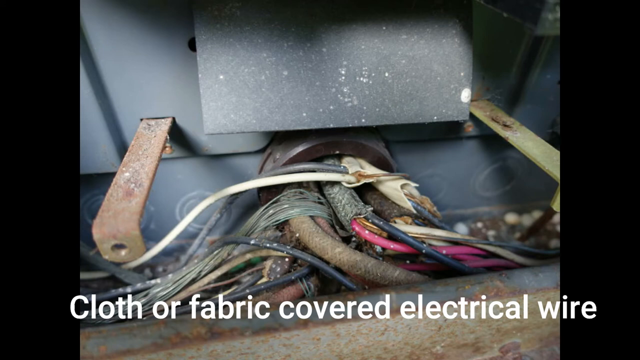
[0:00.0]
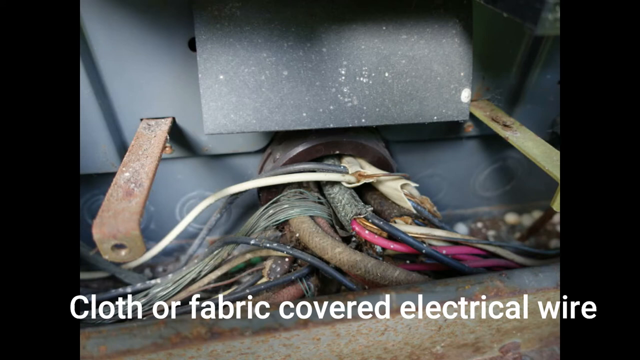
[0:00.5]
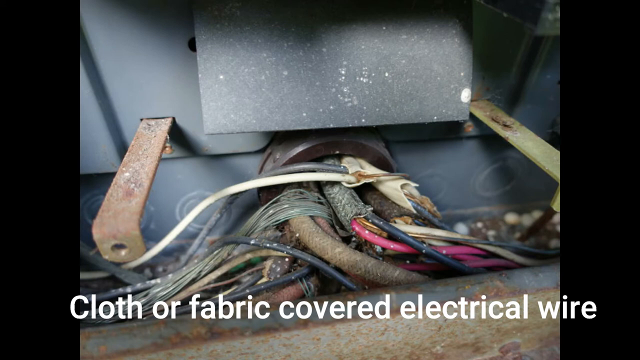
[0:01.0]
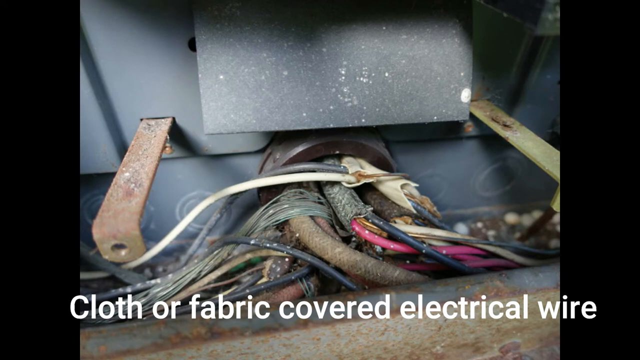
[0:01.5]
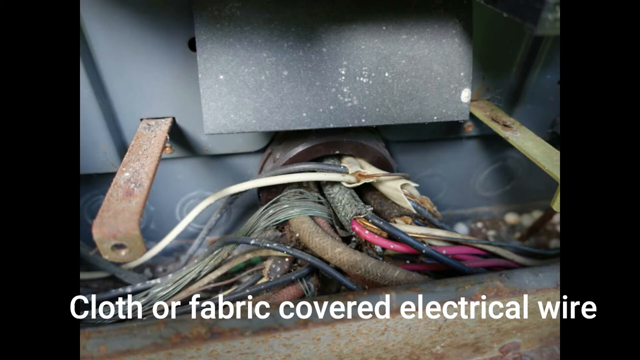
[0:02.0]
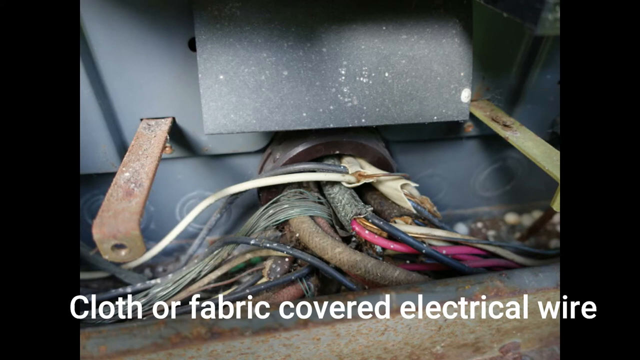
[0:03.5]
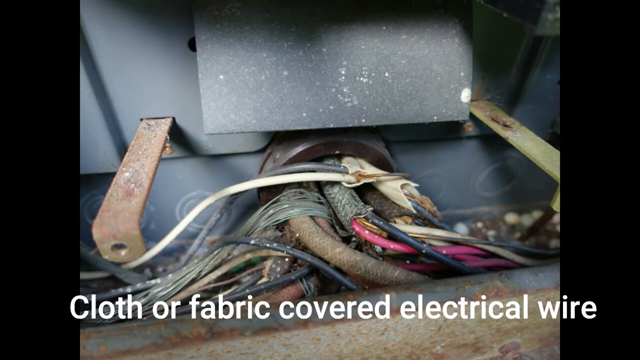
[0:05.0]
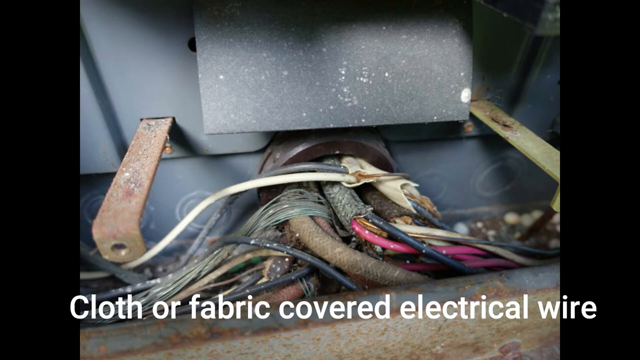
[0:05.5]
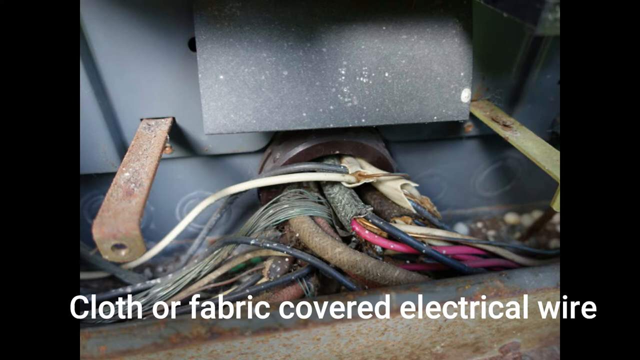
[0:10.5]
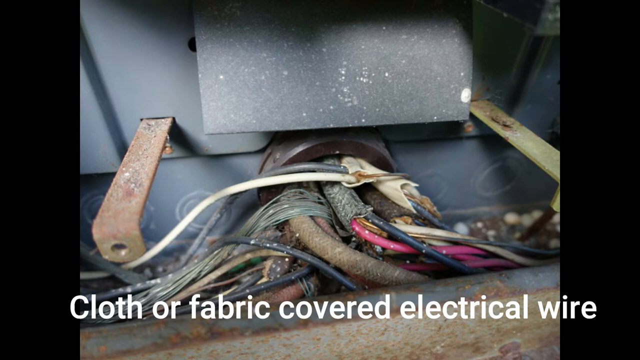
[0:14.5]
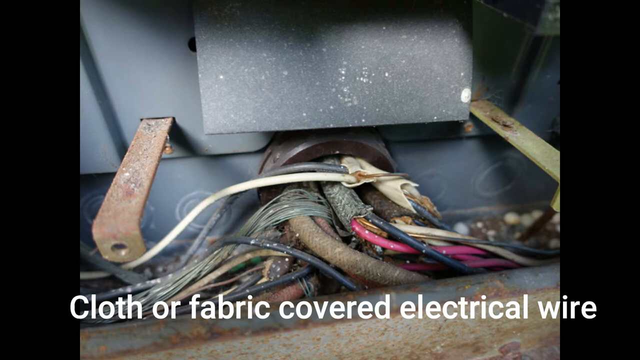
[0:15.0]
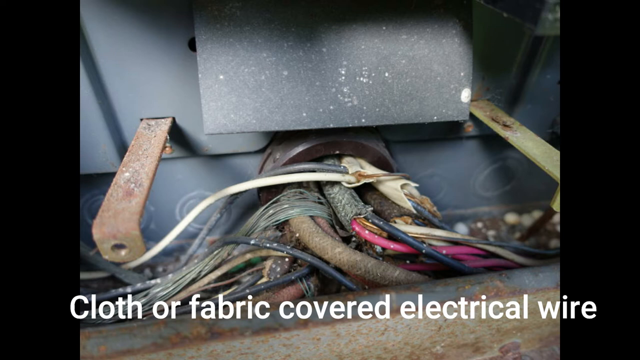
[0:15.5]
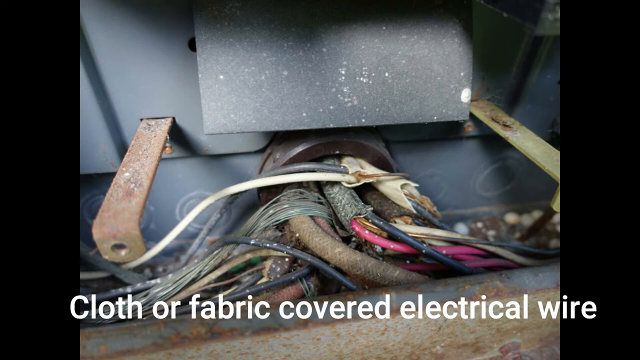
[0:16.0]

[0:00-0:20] A bunch of wires is shown, some of them exposed, with a caption reading "cloth or fabric covered electrical wires." It is unclear where the wires come from; there is metal, and they could be coming from a car, or from some type of device, maybe in a factory. The wires come out of a big brown tube that looks pretty dirty and pretty rusted, and it looks like somebody pulled them through the tube before they spread in all different directions. They are several colors: gray wires, what look like red and maroon wires, and blue wires, going all over the place. The area does not look very clean.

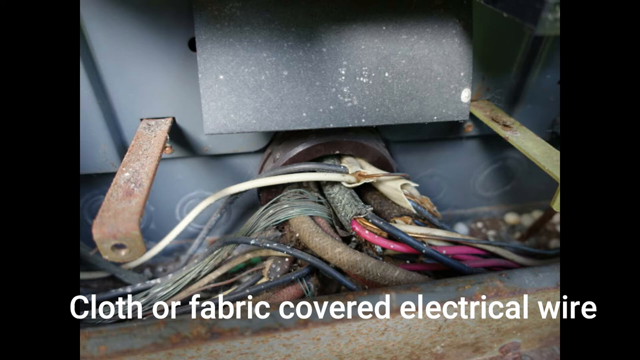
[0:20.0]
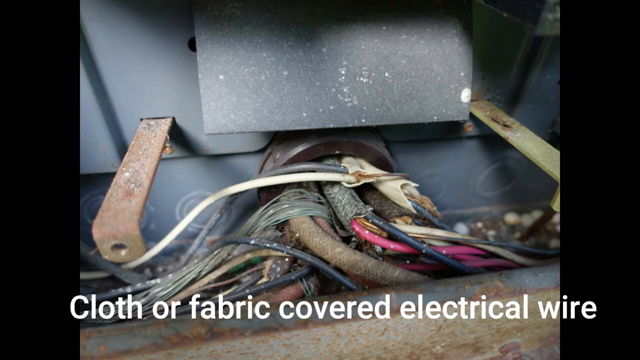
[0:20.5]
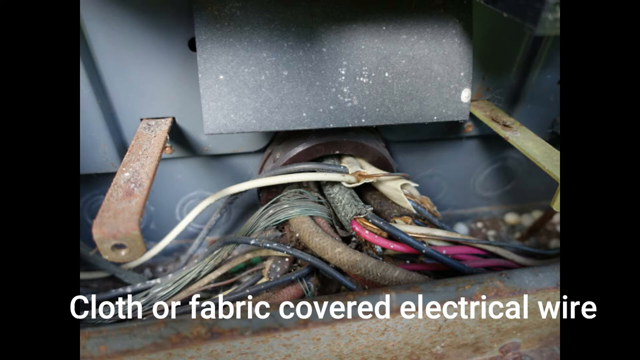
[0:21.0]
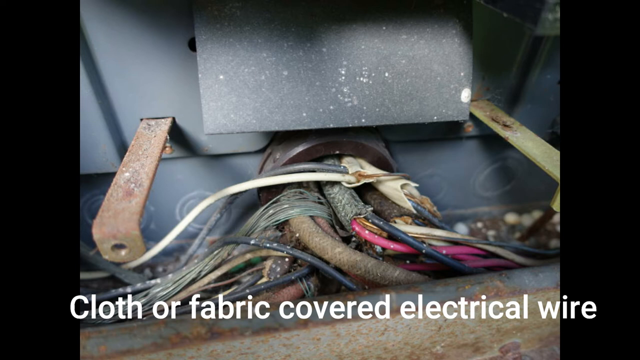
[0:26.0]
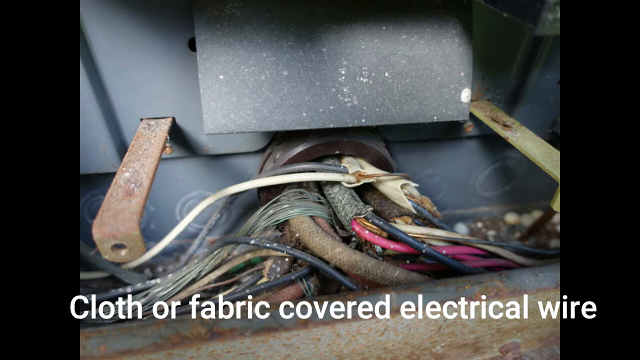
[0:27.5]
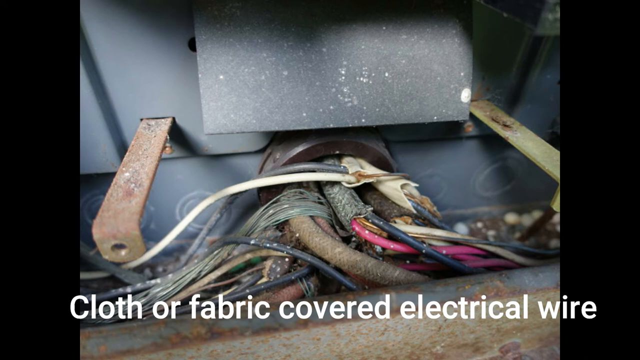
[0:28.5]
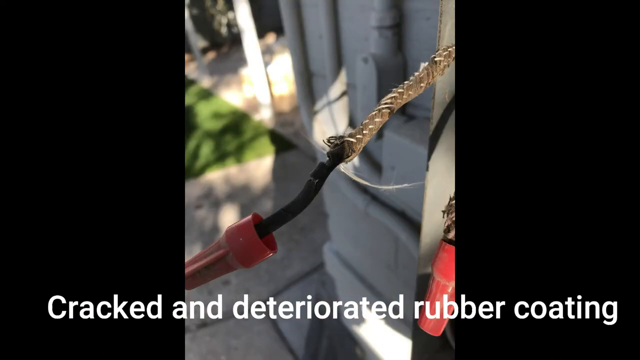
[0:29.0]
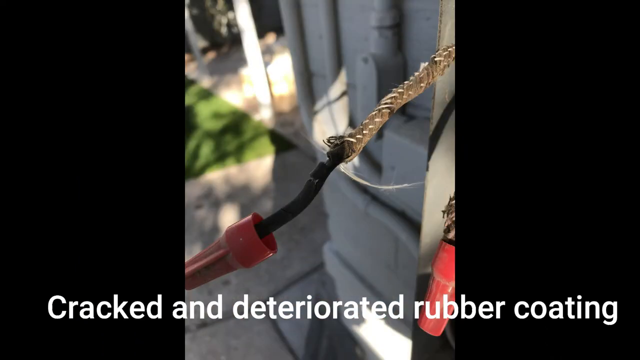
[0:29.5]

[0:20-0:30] A bunch of wires comes out of the big brown tube and goes in all different directions. Some are kind of covered, some are covered in brown, and some come out of what look like conduits and are a little more exposed. Some wires are white, some look blue, and some look pinkish. They may be in some type of machine or manufacturer. A caption reads "cloth or fabric covered electrical wires." The machine the wires come out of looks pretty rusted. The video then cuts to a different shot of one wire that is connected, kind of braided, and going into what looks like a red tube.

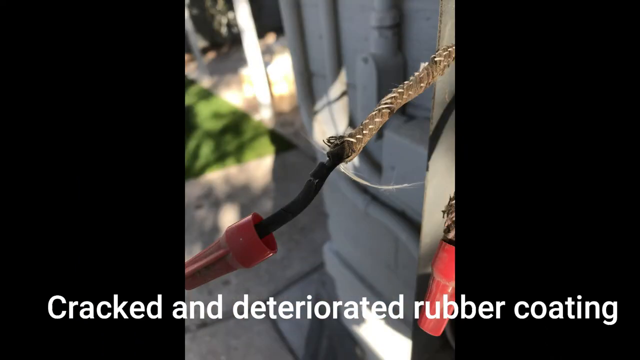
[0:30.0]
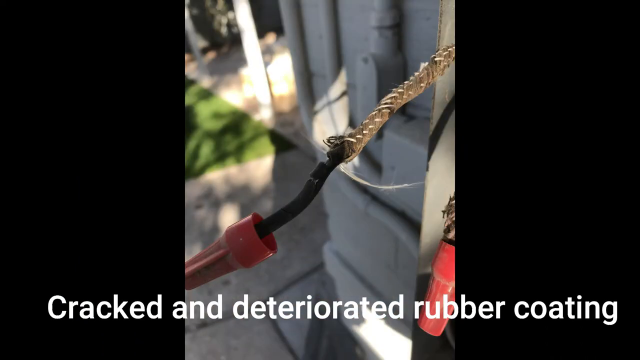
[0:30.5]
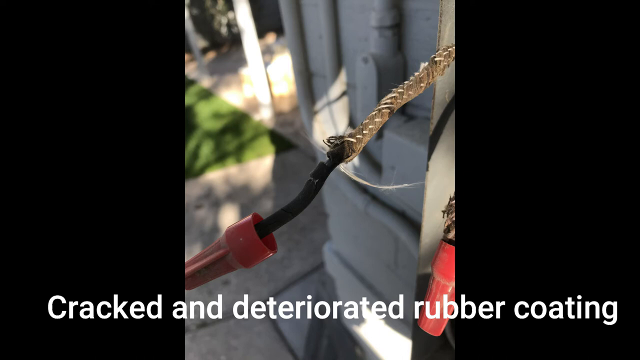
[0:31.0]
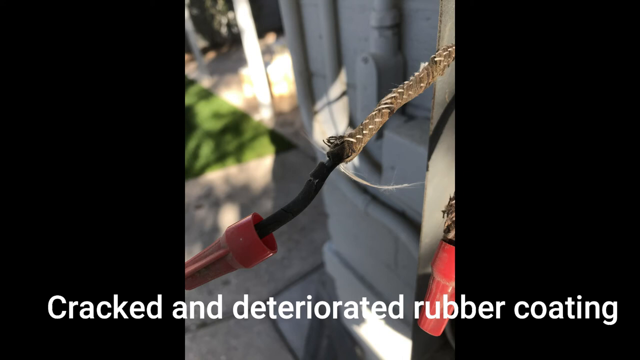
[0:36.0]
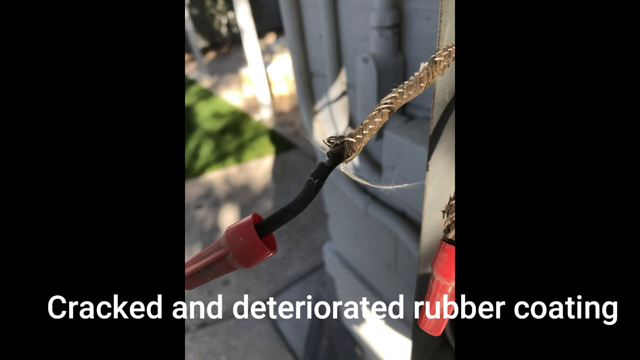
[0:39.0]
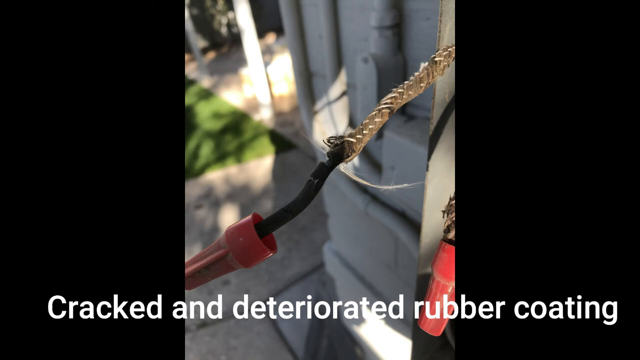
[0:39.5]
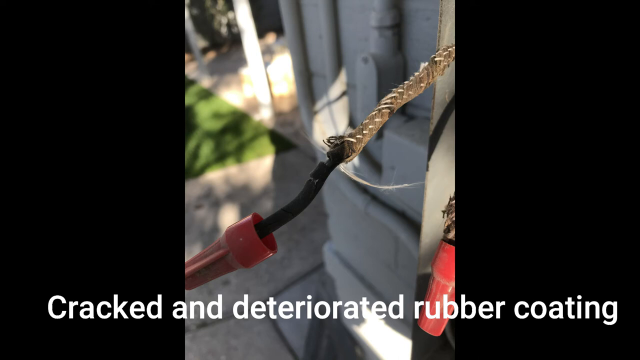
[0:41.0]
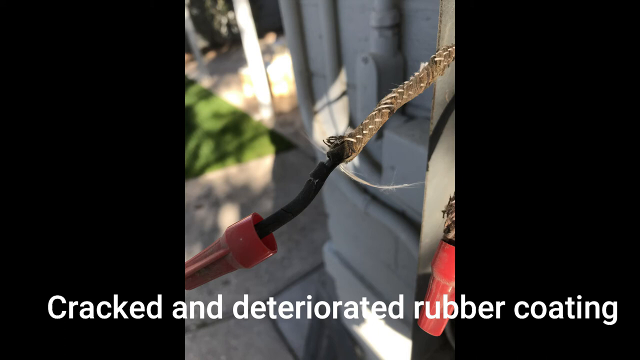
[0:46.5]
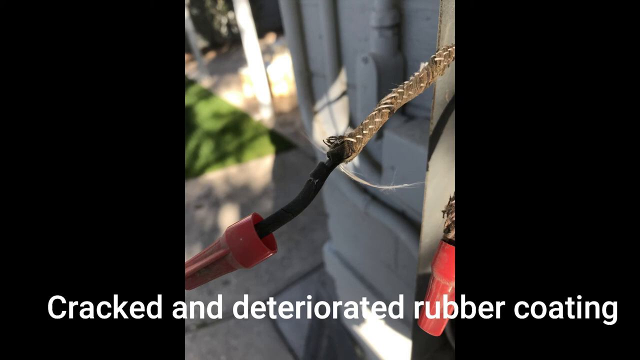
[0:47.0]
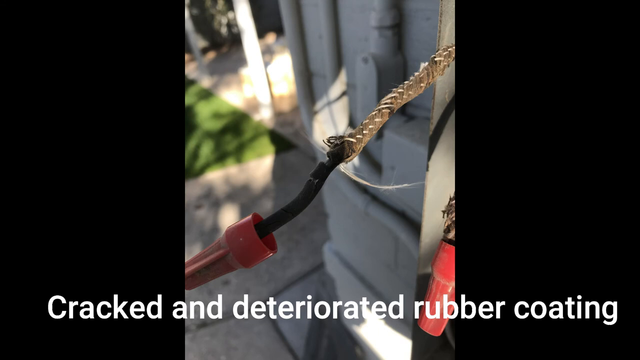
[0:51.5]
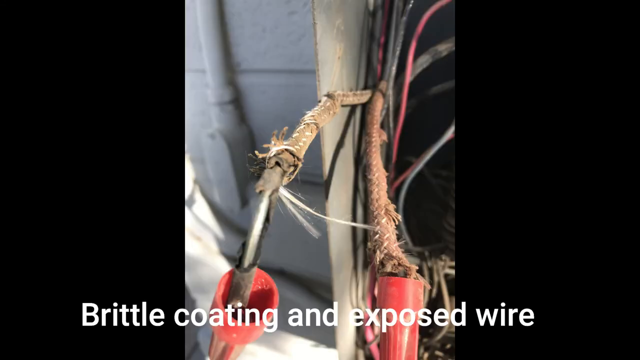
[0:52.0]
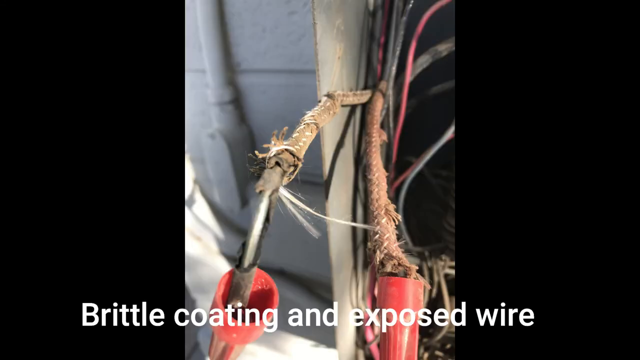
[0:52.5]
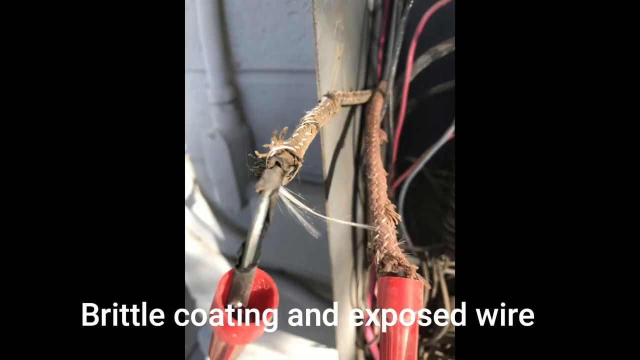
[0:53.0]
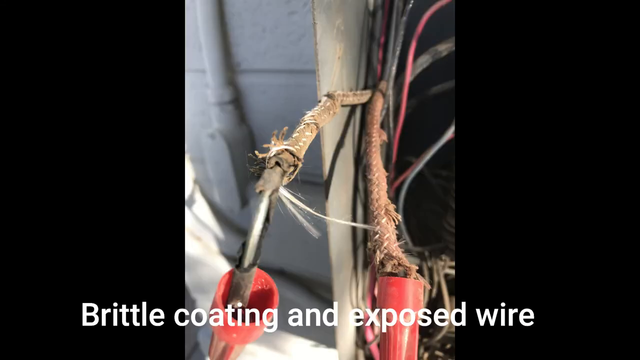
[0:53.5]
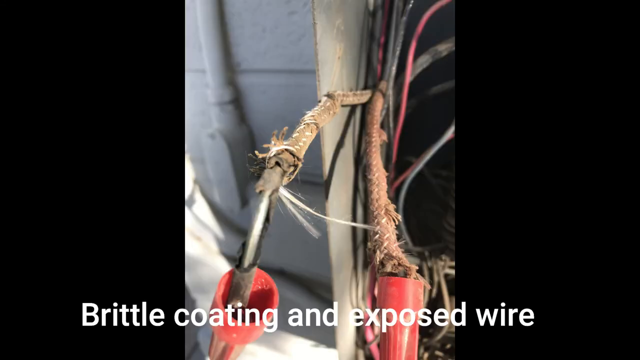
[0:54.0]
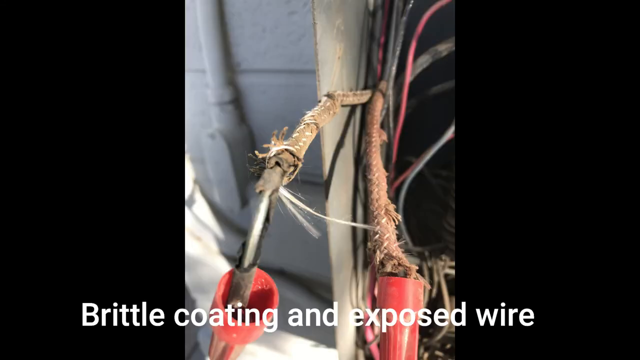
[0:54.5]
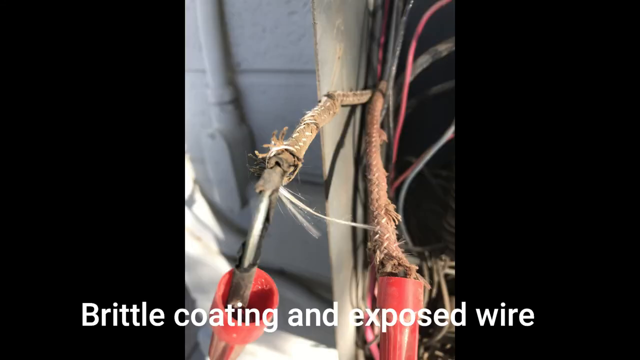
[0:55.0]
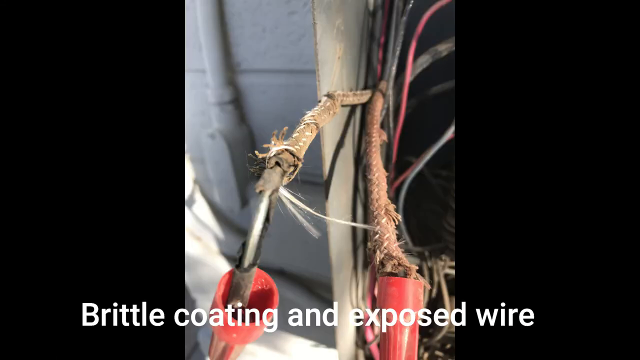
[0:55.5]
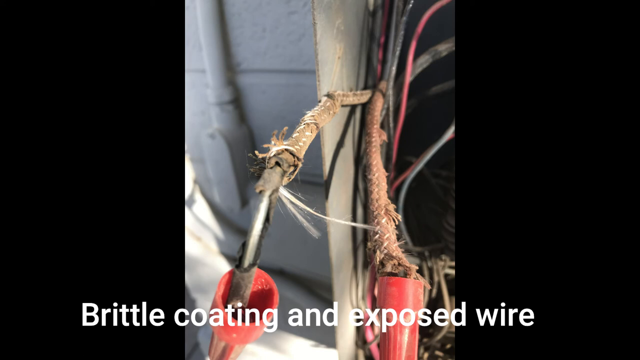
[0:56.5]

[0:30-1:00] The wire looks damaged, with a red tube at it. A caption reads "cracked and deteriorated rubber coating." The rubber coating looks like it has been cut, exposing the wires, which have been braided and have the rubber coating on them. The wire is exposed. A close-up picture of the wire follows with the caption "brittle coating and exposed wire," showing where the wire has been exposed, with white material kind of holding things together also exposed. The wire looks like it could be coming out of an AC unit or something, and it is on the side of a building.